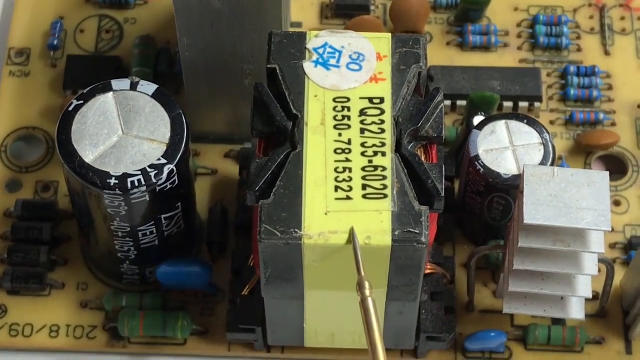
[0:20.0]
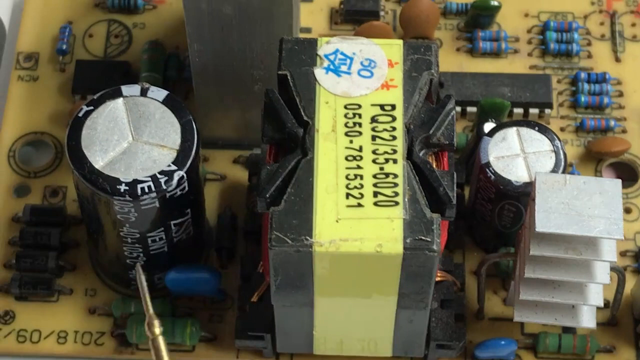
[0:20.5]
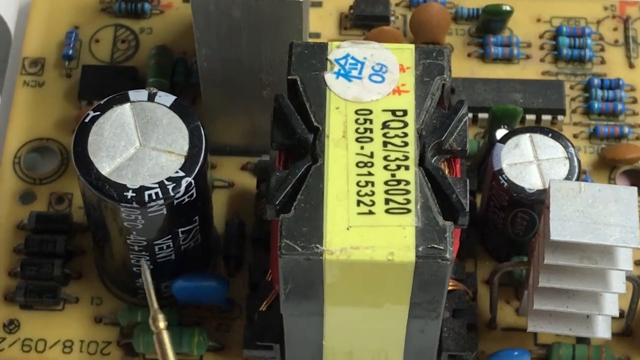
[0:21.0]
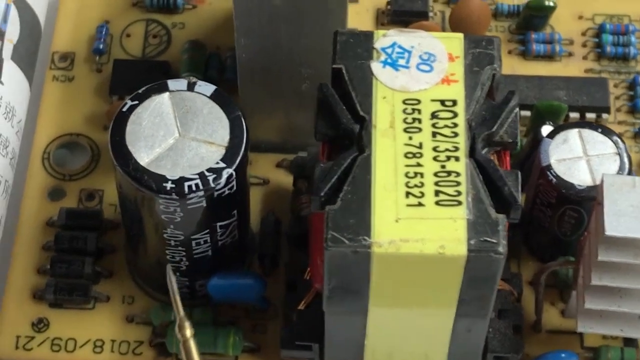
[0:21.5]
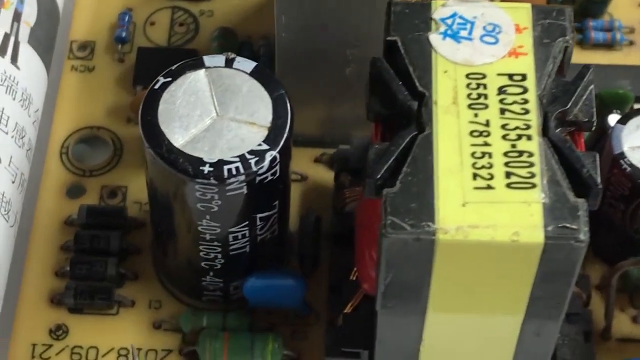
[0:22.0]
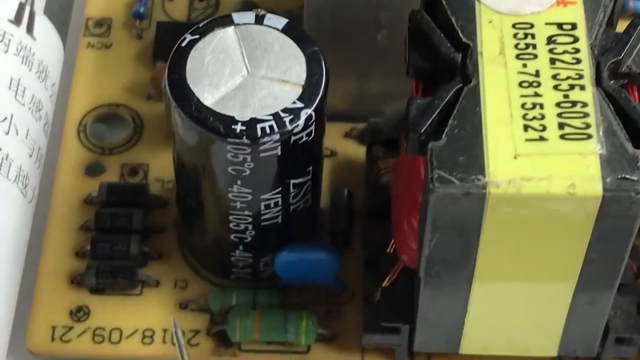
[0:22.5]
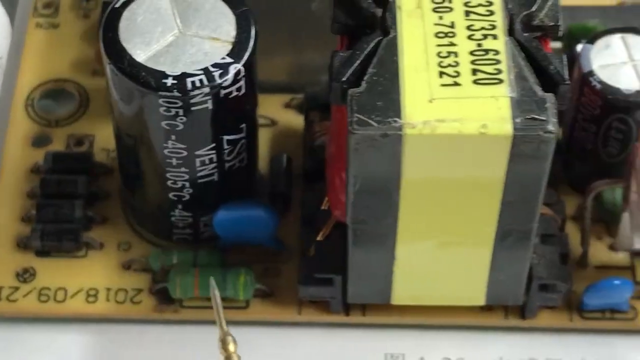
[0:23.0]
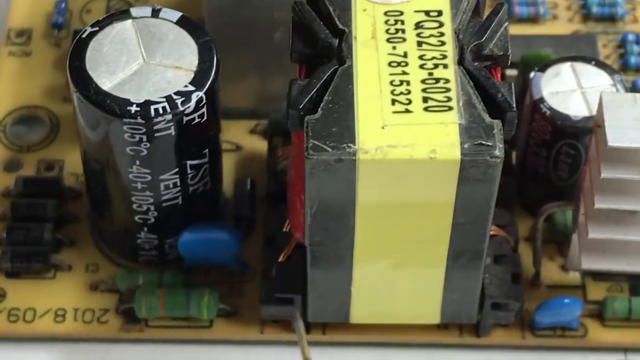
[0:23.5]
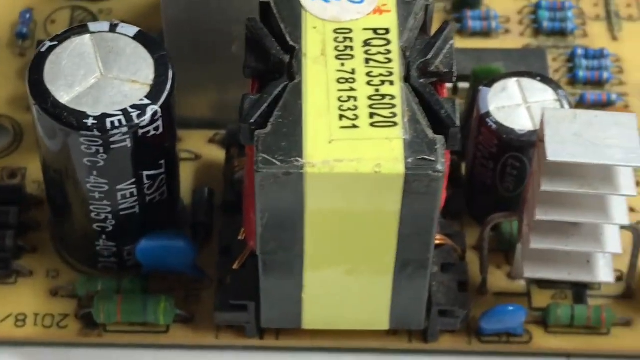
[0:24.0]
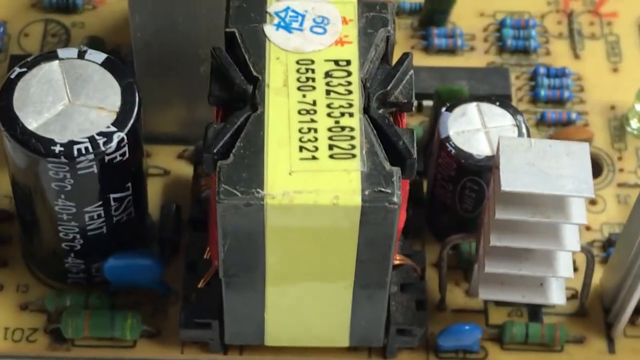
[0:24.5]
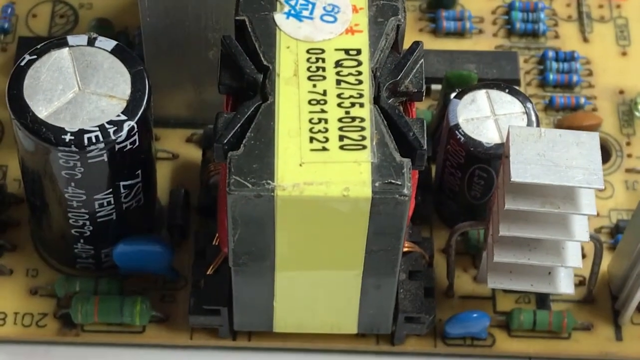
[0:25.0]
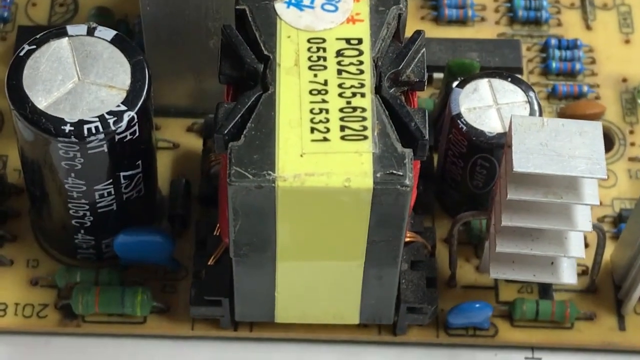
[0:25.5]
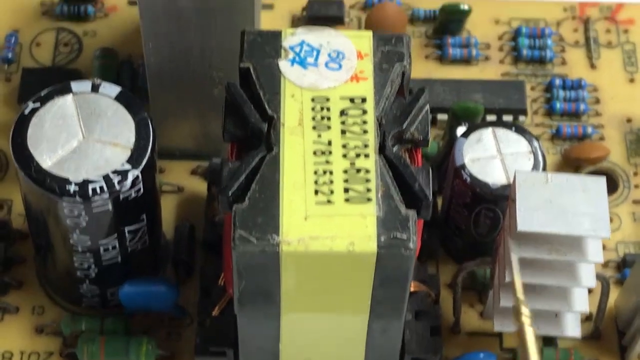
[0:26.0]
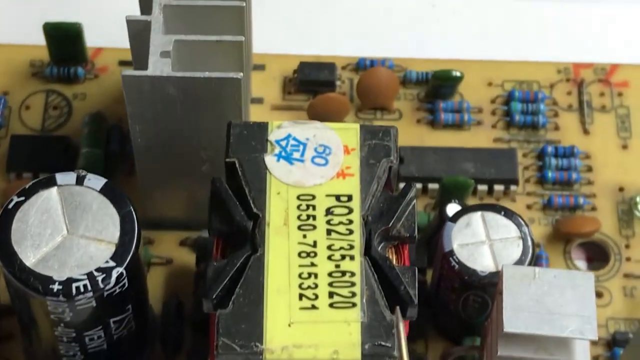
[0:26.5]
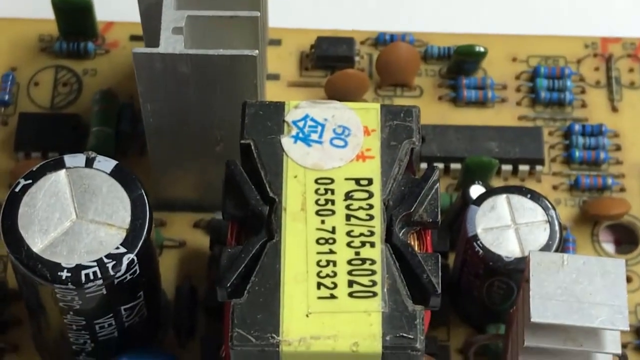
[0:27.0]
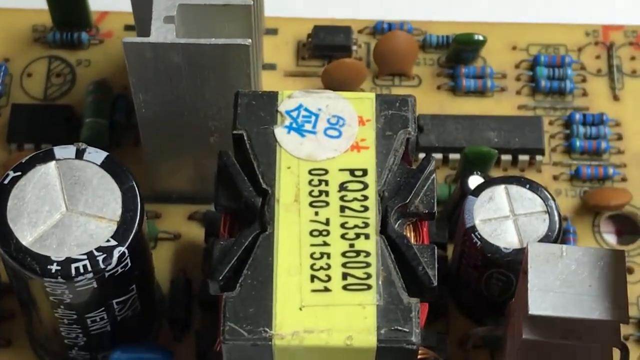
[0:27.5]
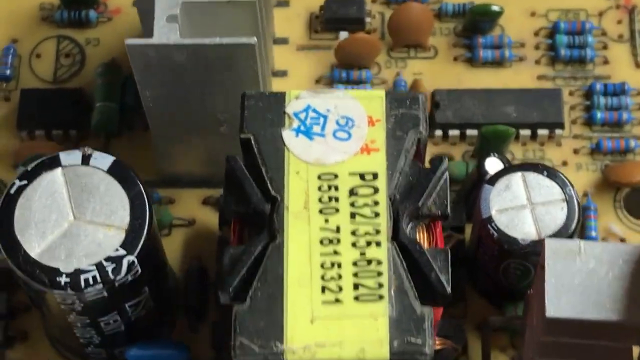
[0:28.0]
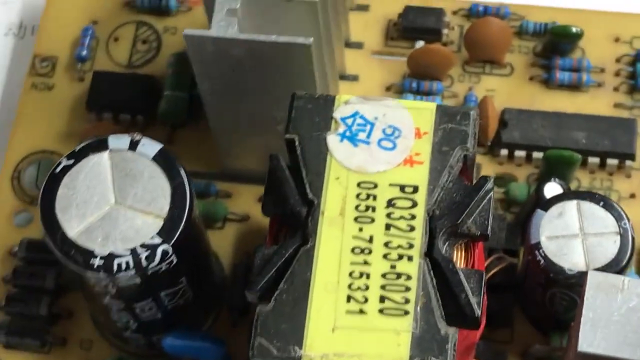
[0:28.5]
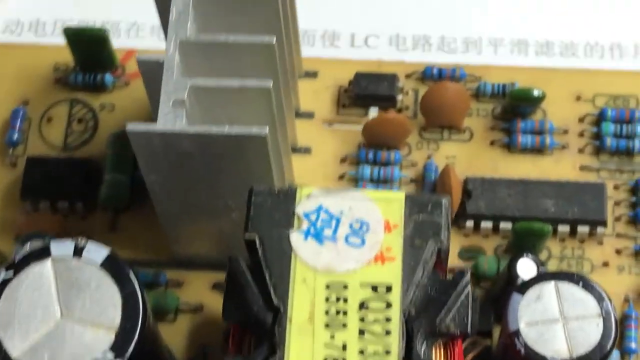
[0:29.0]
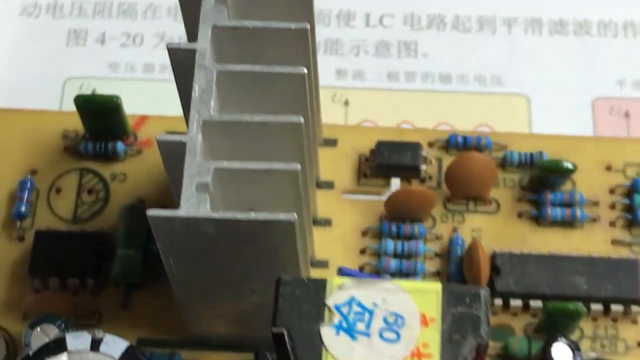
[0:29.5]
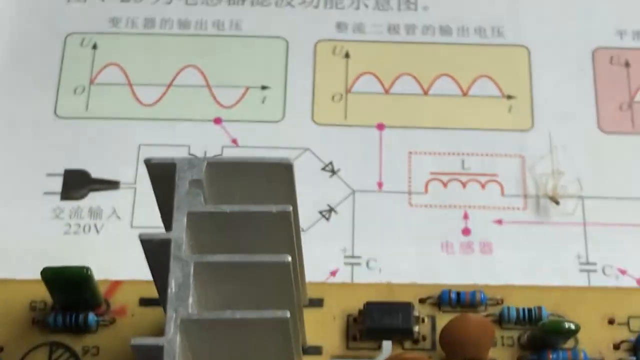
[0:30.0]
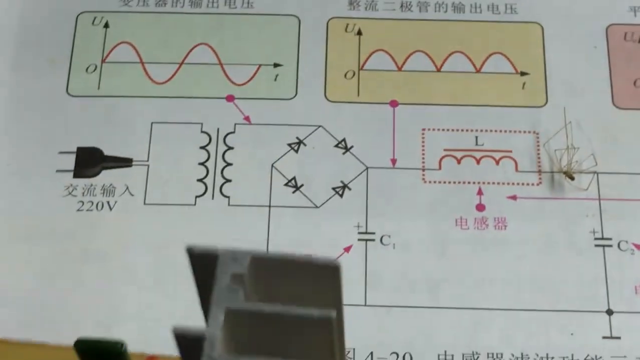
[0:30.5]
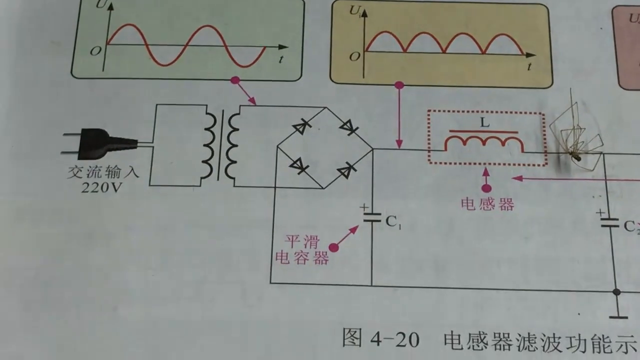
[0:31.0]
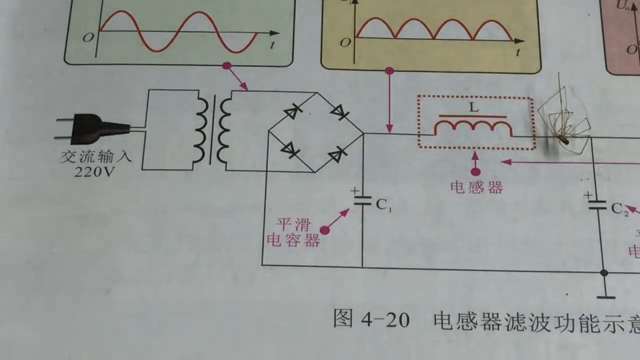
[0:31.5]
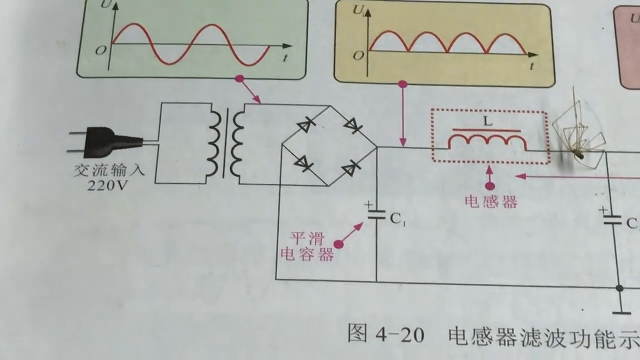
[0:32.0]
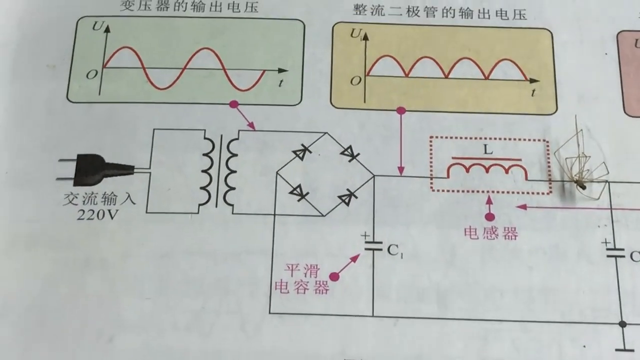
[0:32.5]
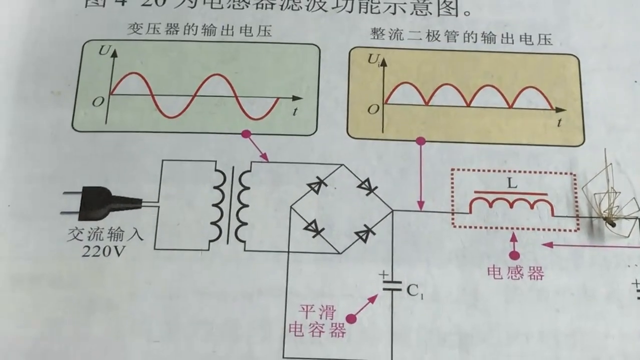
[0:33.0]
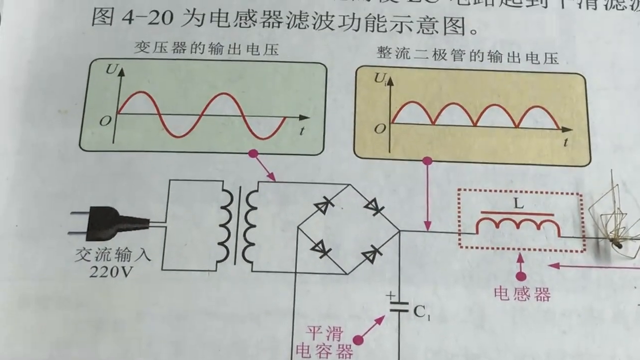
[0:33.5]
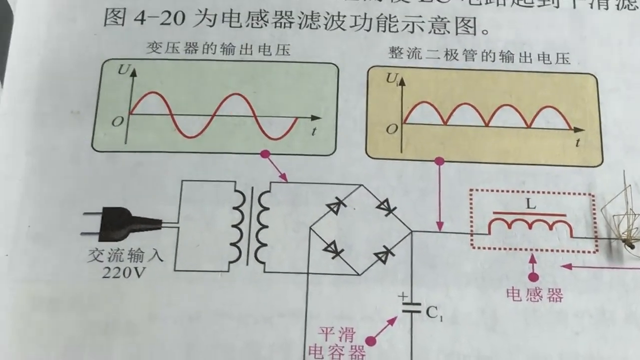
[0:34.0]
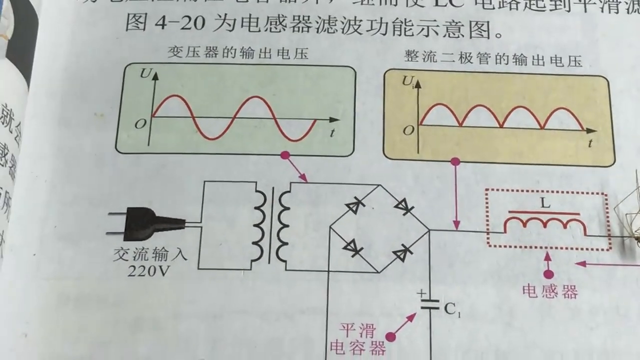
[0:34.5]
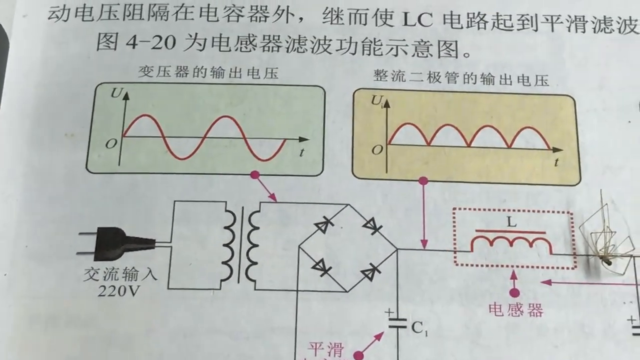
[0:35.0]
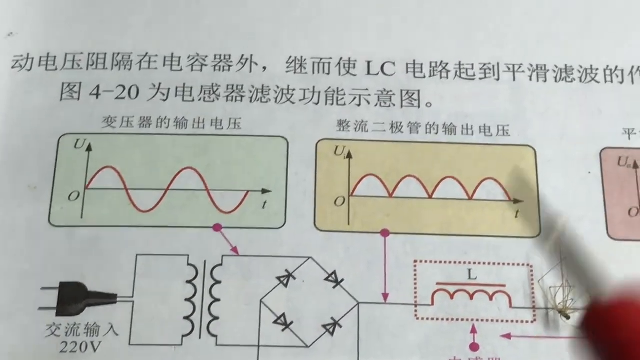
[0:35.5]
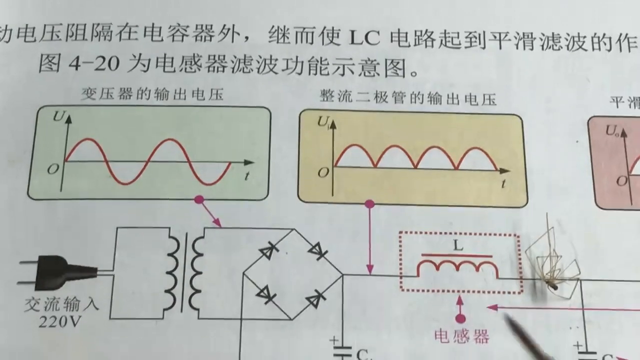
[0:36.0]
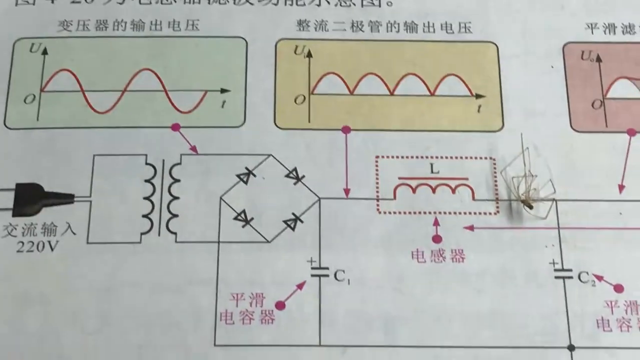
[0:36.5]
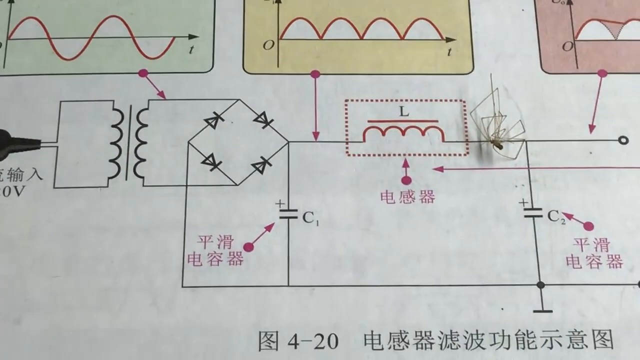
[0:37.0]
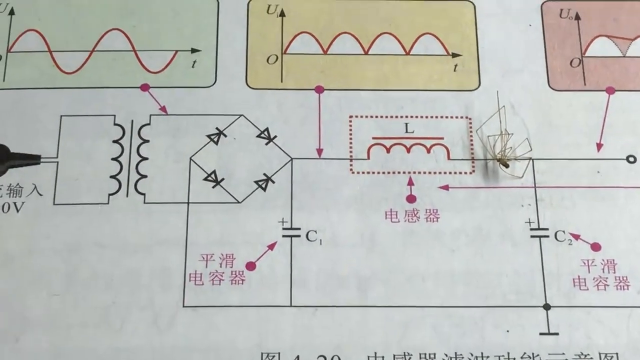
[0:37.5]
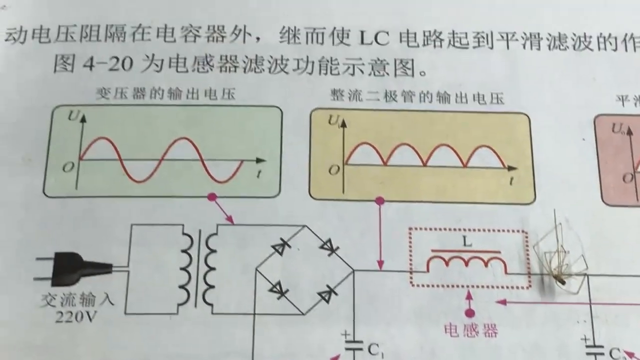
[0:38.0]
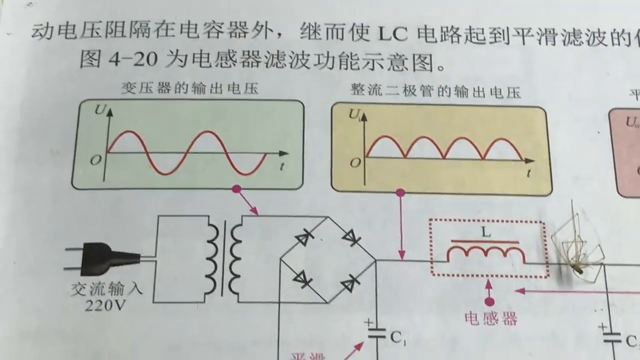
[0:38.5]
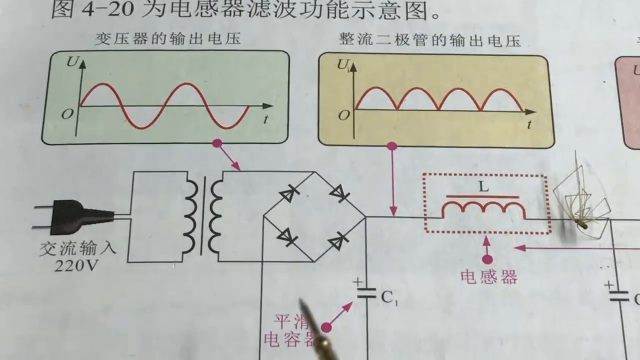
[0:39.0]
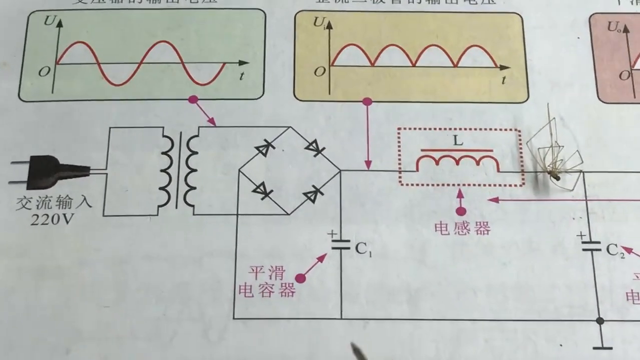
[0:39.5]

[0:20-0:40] A close-up shows a sort of orange circuit board with a bunch of little circuits on it, some blue and some brown. There are some black batteries, and a sort of yellow label with numbers and letters on it is on a black item in the middle of the board. The tip of a screwdriver moves over the board as someone motions to different things on it. The camera pans up and the person moves the circuit board away, revealing a book with what looks like some sort of schematic. The diagram has a plug on the left with the text "220 volts", little green and yellow squares, and a bunch of Chinese characters. A little dead spider is on the right-hand side.